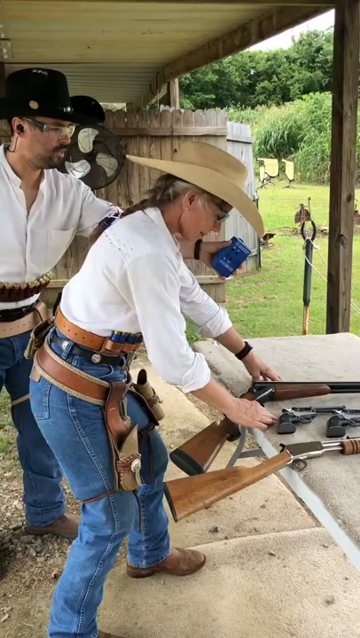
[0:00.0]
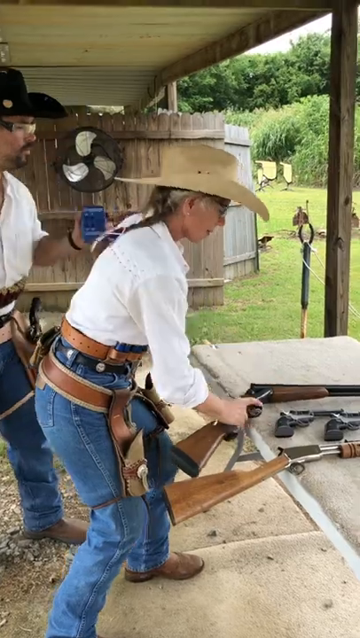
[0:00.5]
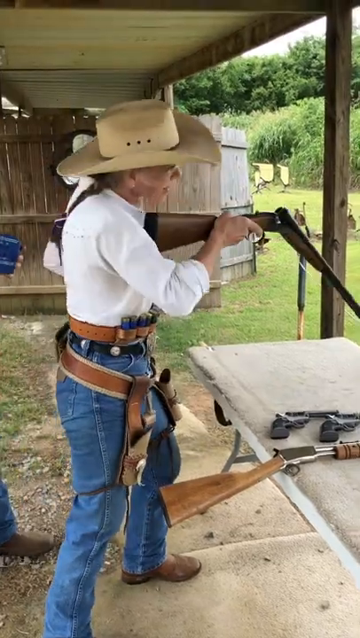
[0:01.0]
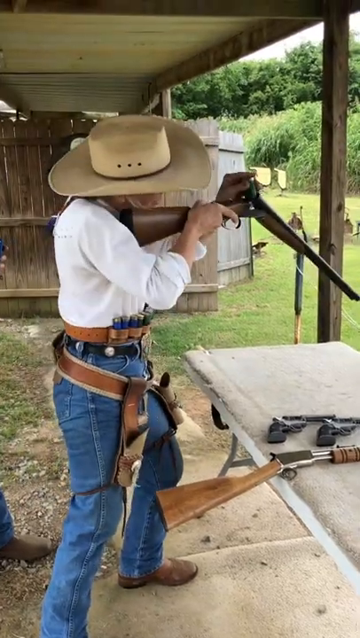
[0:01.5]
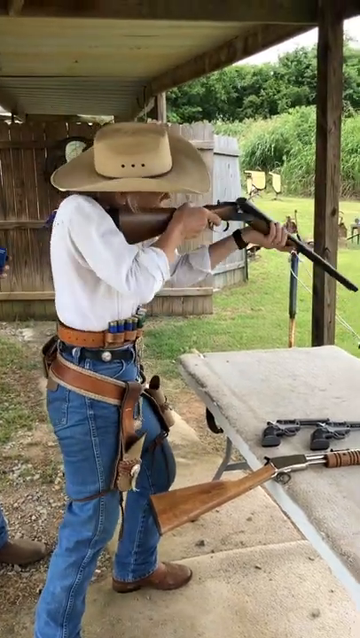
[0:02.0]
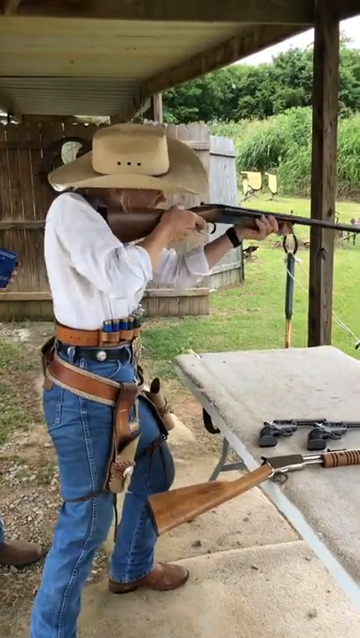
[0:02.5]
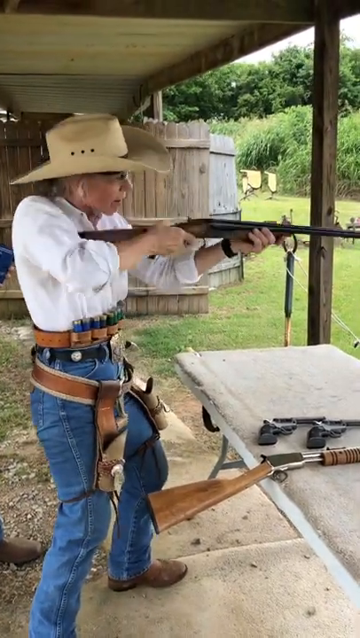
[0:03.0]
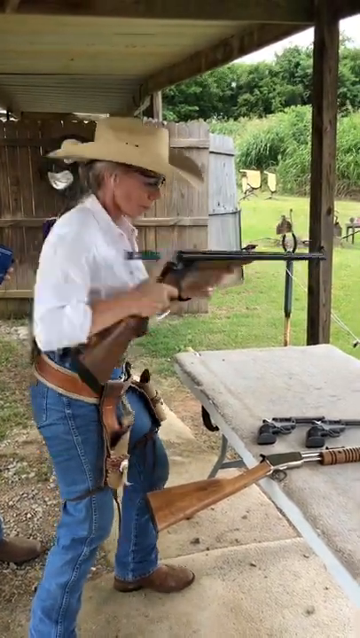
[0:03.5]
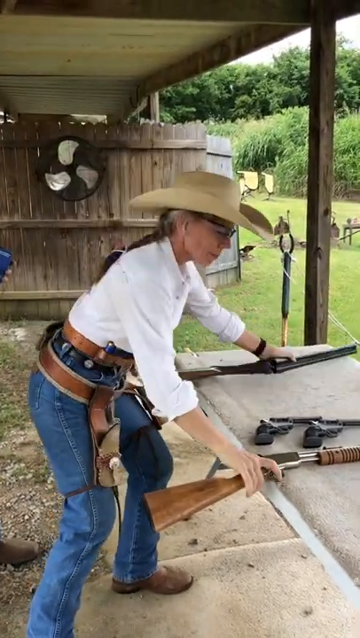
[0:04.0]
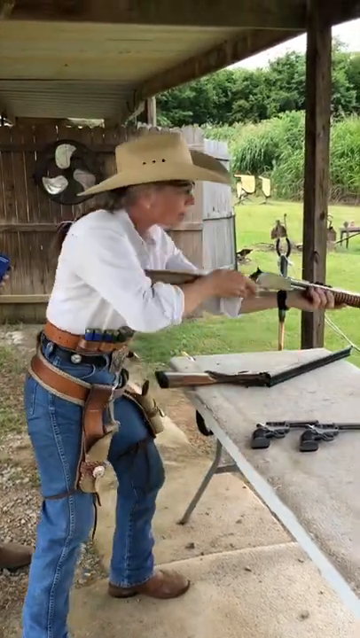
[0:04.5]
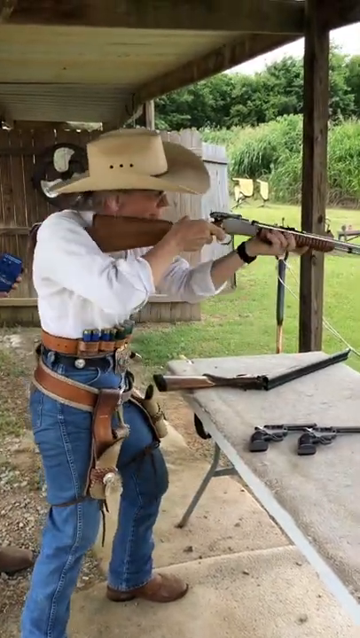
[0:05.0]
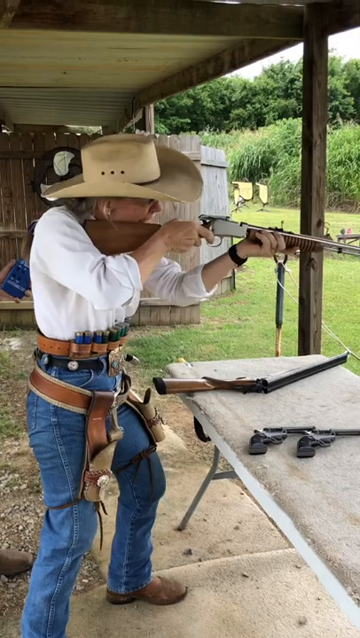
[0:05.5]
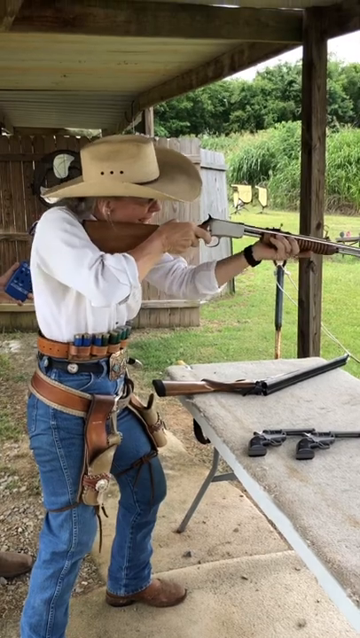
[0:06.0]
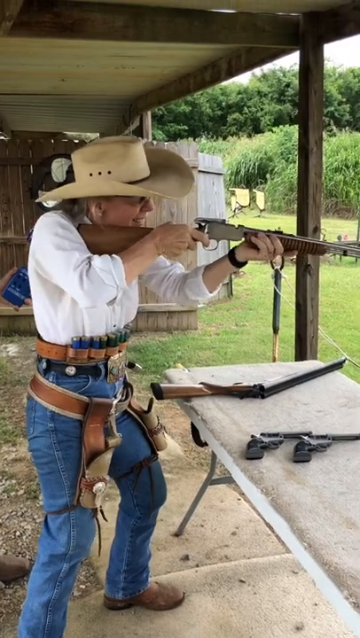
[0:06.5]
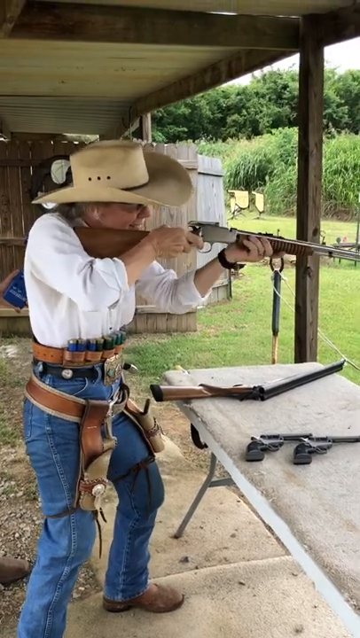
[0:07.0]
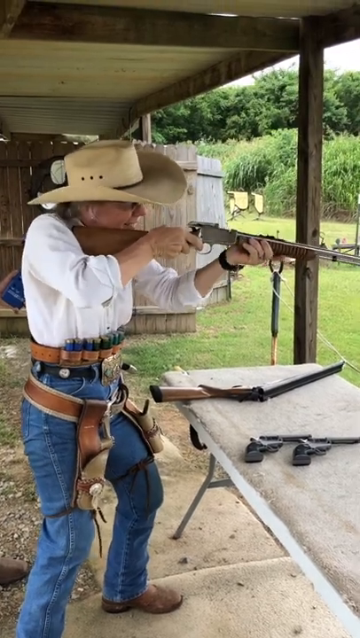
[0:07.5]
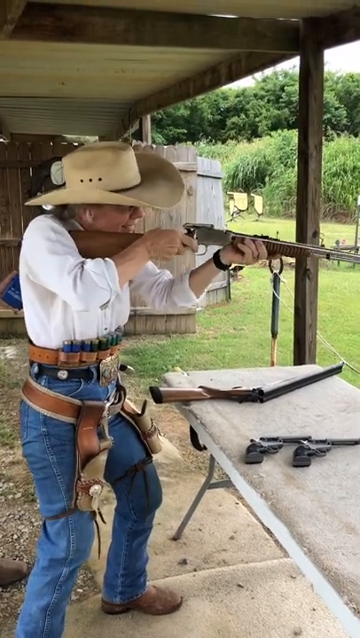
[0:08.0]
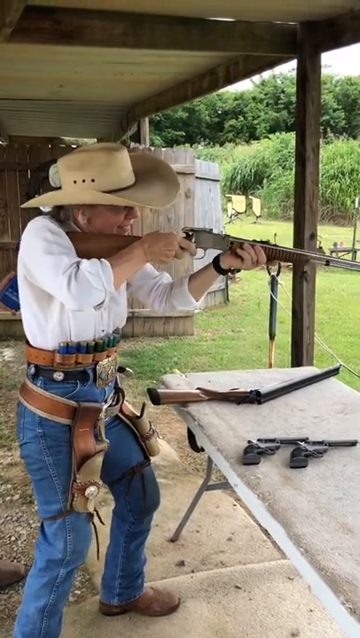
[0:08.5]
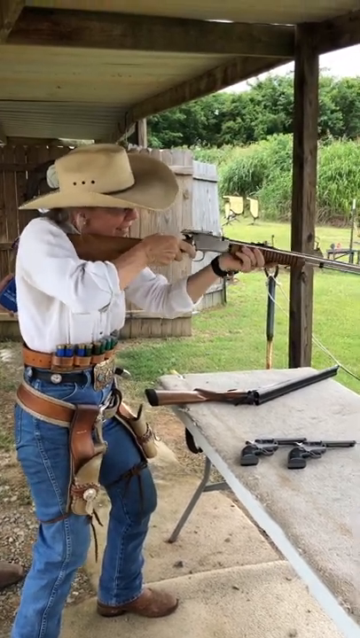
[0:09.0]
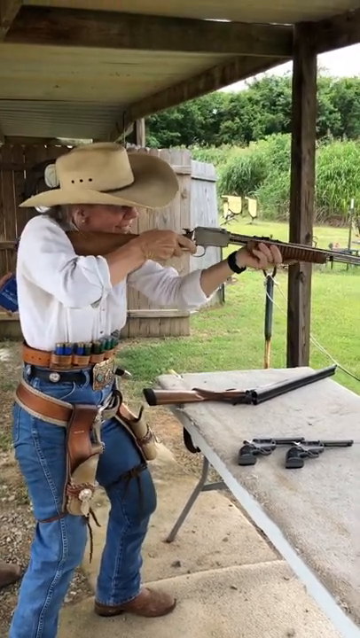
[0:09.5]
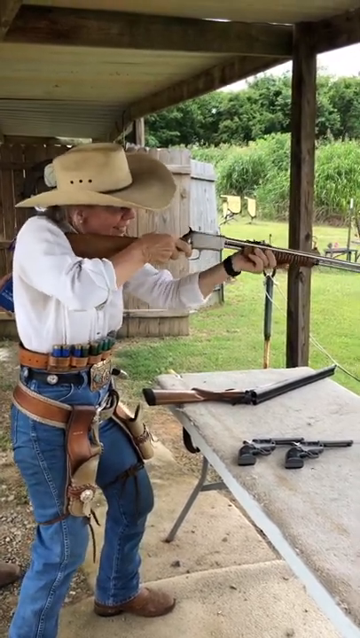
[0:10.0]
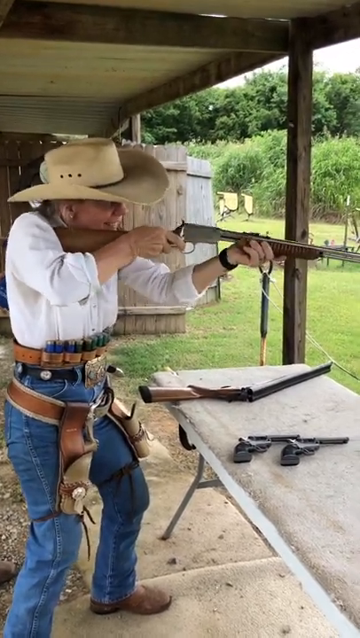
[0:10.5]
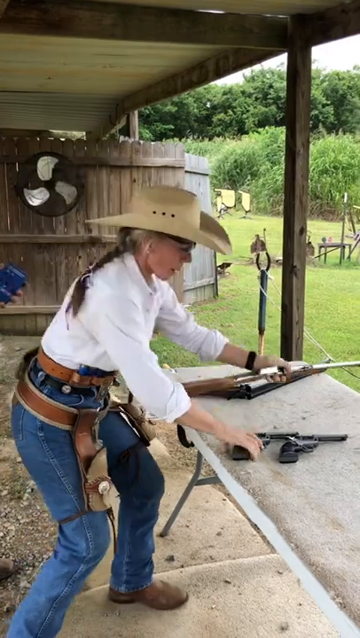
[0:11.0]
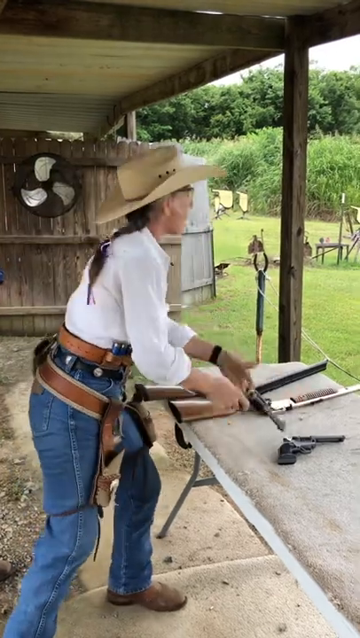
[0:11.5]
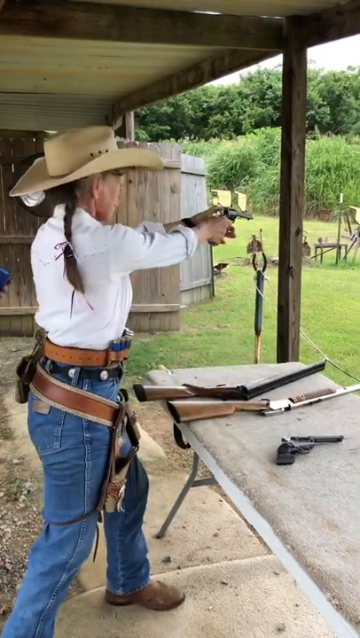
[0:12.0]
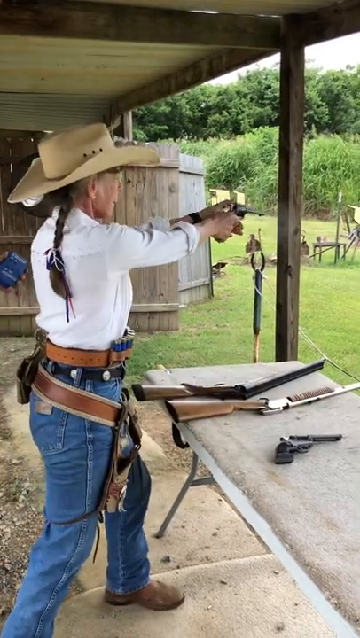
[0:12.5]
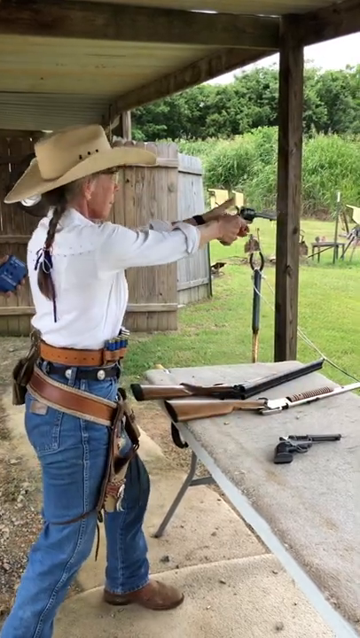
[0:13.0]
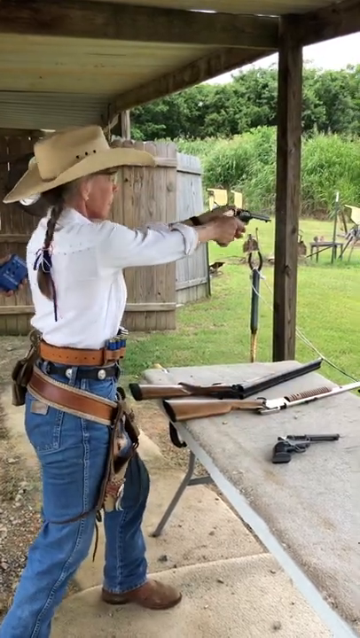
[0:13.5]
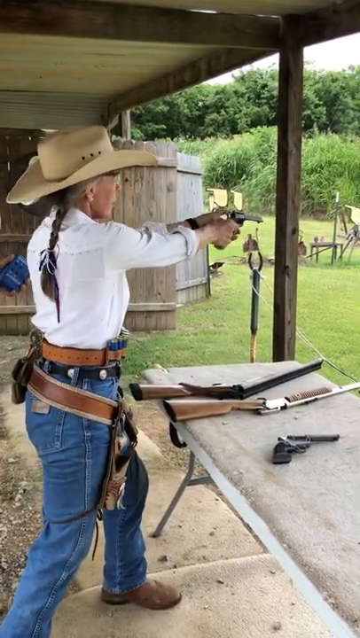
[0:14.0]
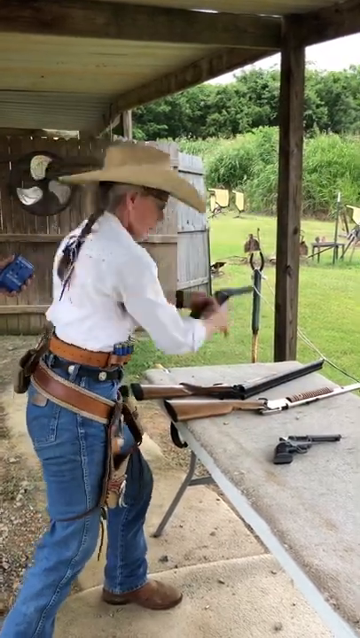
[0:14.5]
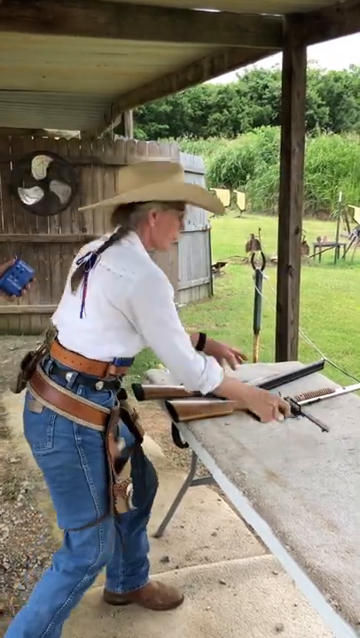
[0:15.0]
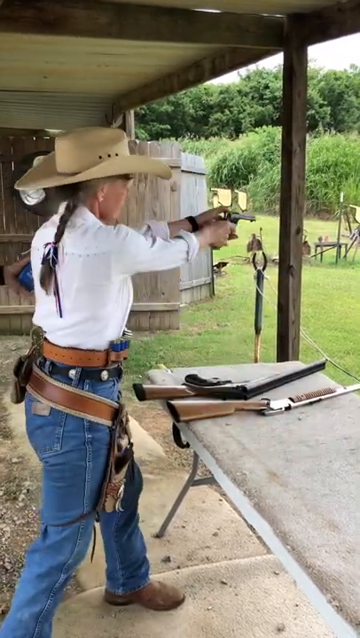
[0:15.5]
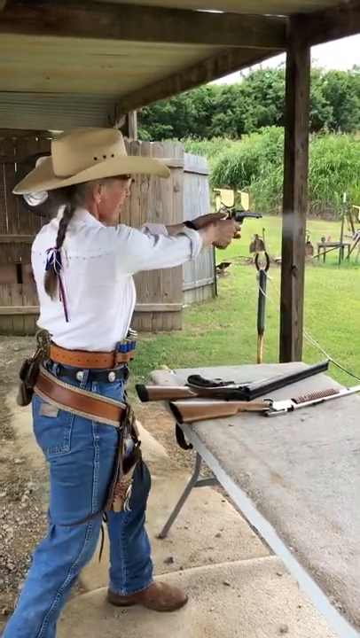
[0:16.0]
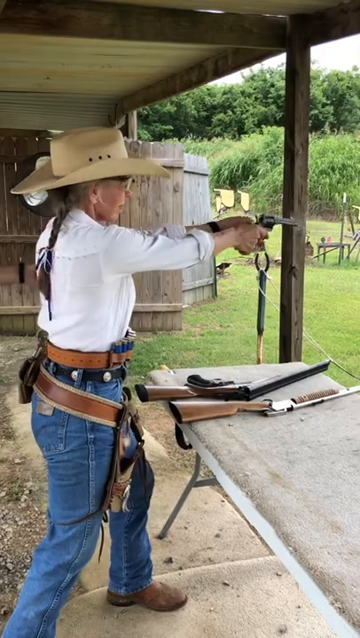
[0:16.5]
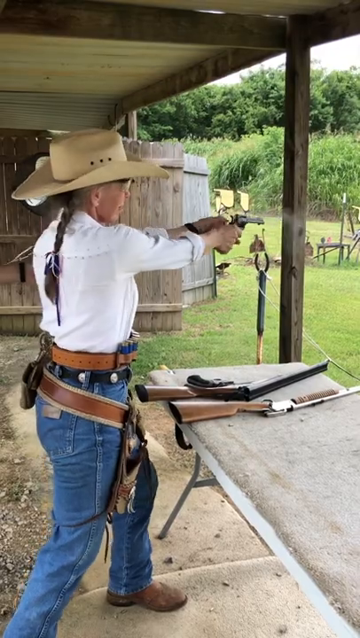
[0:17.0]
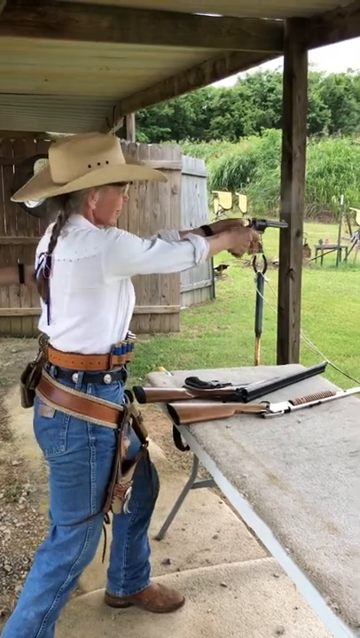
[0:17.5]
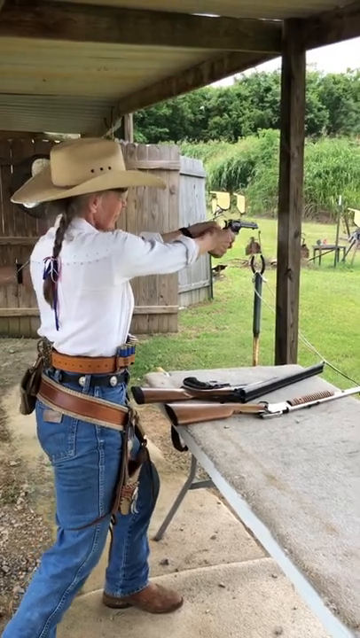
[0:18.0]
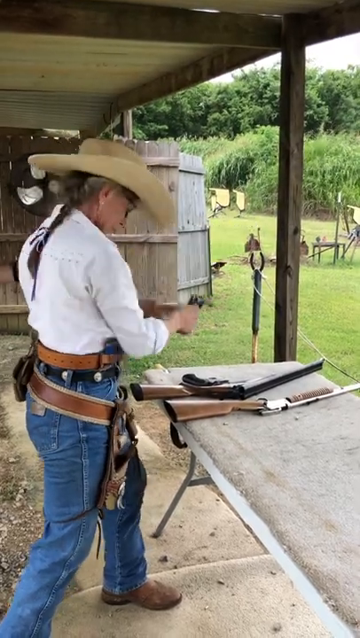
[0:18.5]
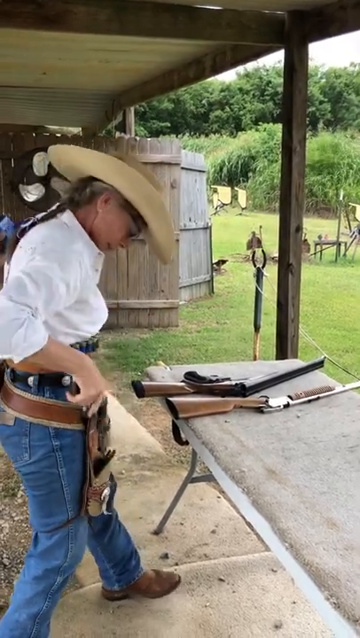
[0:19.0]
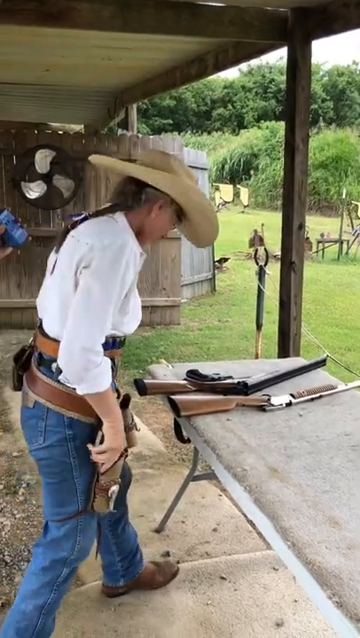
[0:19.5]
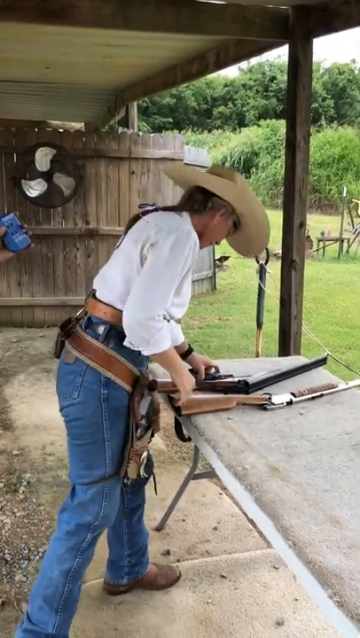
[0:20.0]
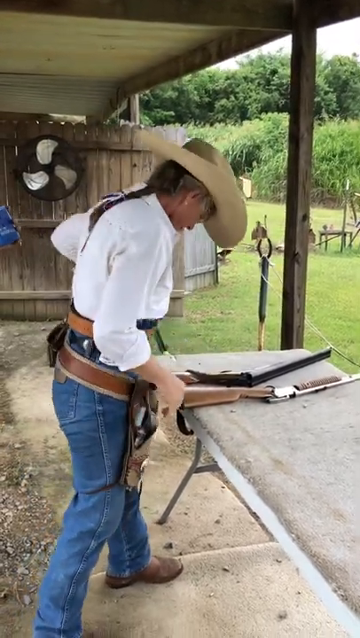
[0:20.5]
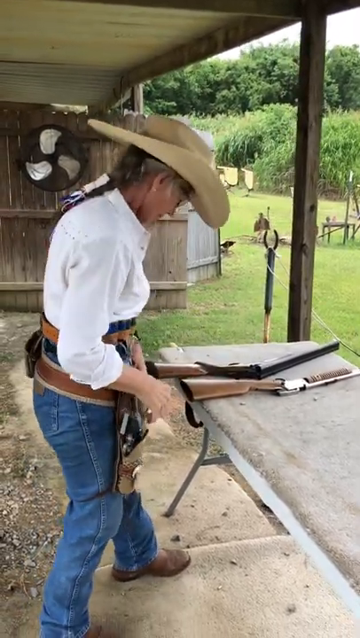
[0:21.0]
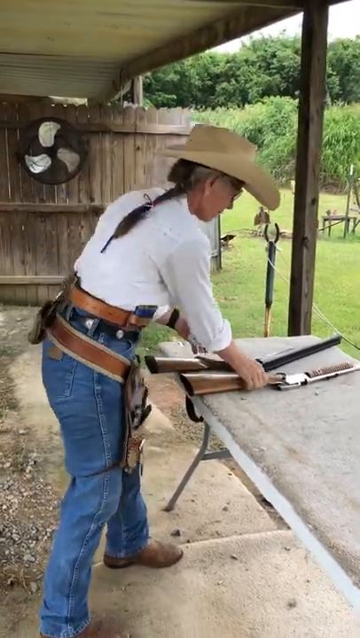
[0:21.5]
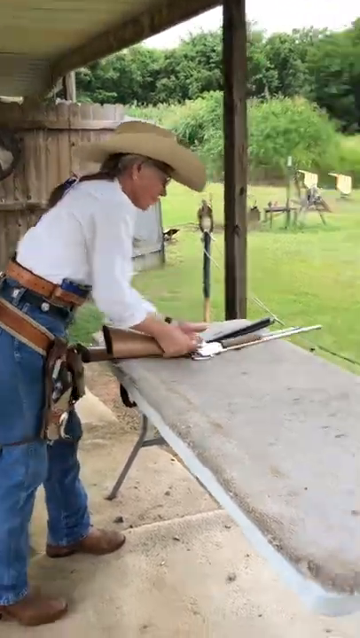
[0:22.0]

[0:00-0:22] What looks like a female cowgirl holds a rifle. She appears to put two bullets inside the rifle and then shoots them. She grabs another rifle, starts pumping it, and appears to aim; as she pumps, the gun apparently shoots. She puts it back down on the table, grabs a gun and starts shooting it, then puts that gun down, pulls another gun and starts shooting that one. When she is done, she puts it in the holster she has wrapped around her waist. She wears a white cowboy shirt, jeans, brown boots and a light brown cowboy hat, and appears to have gray hair. She looks to be at a shooting range, with a white table in front of her. There seems to be a range with green grass everywhere on the side, and bushes can be seen all the way in the background.